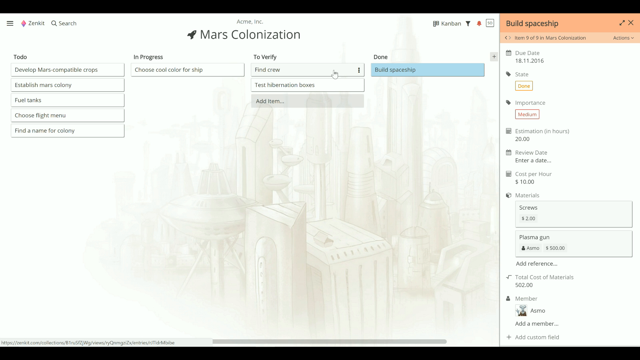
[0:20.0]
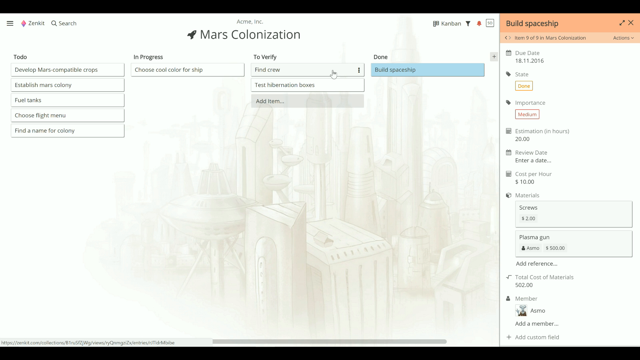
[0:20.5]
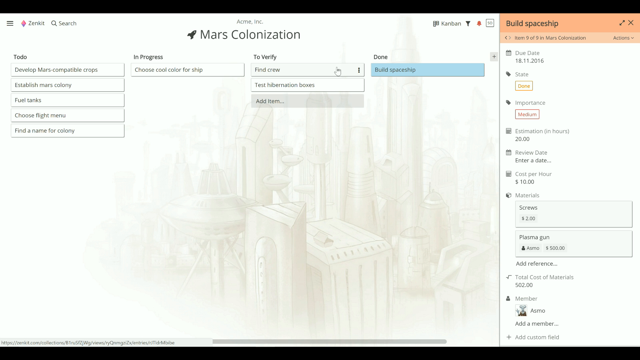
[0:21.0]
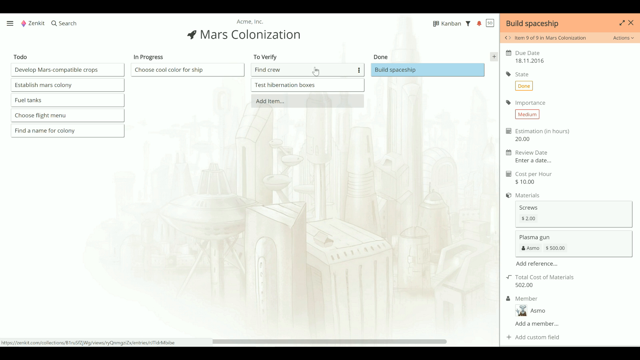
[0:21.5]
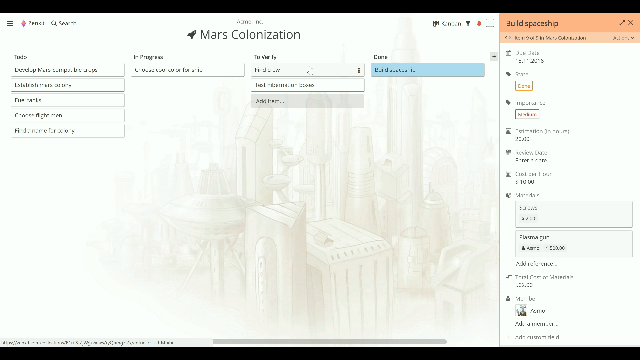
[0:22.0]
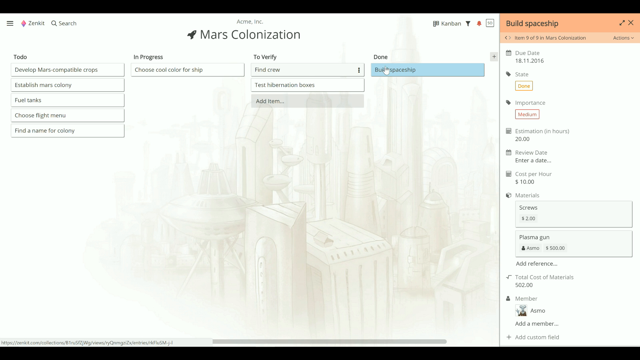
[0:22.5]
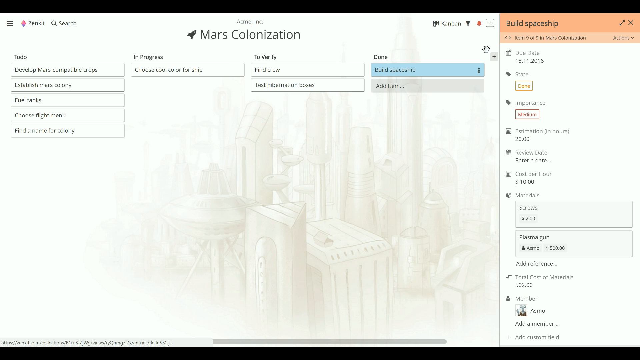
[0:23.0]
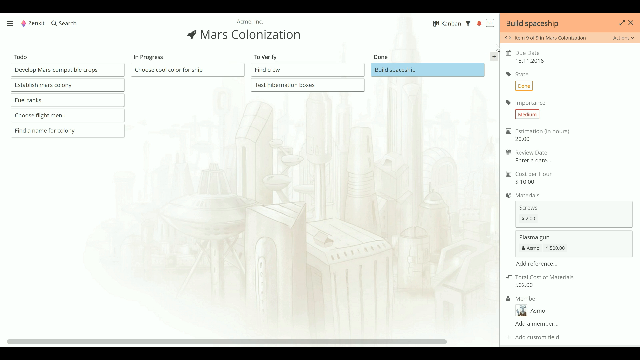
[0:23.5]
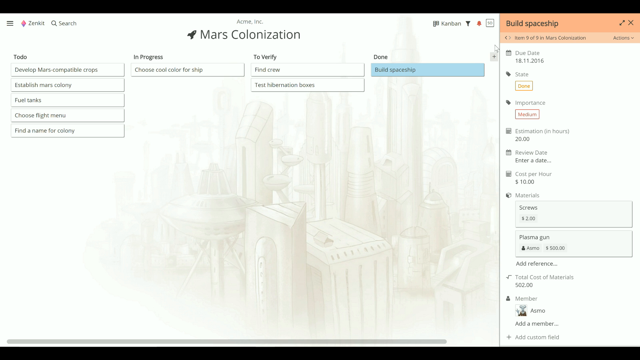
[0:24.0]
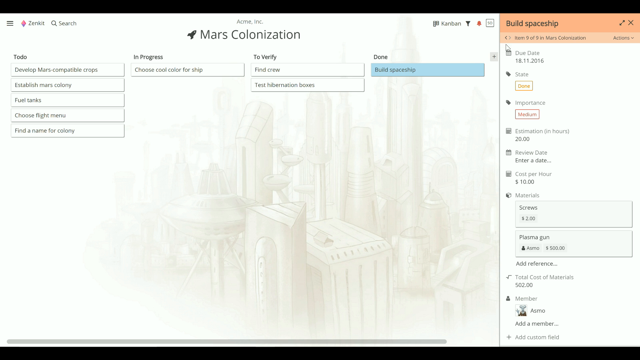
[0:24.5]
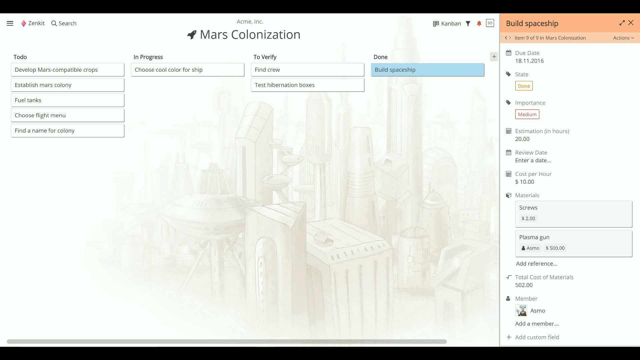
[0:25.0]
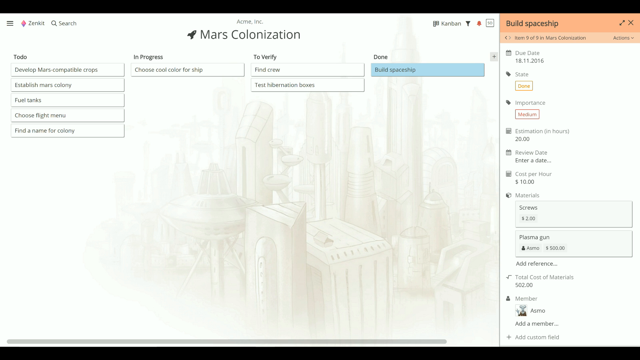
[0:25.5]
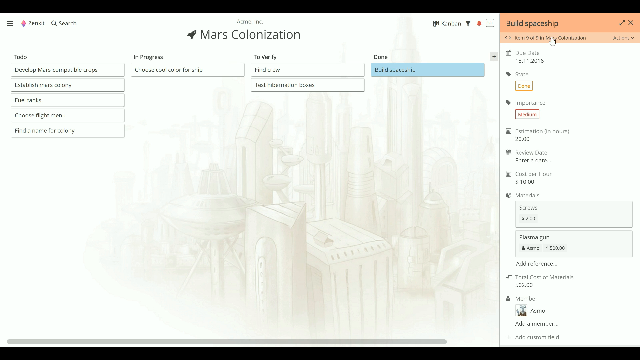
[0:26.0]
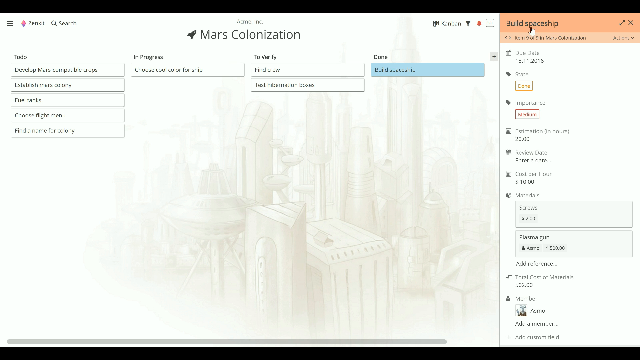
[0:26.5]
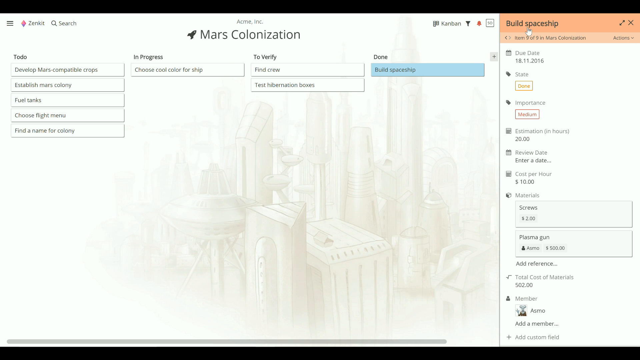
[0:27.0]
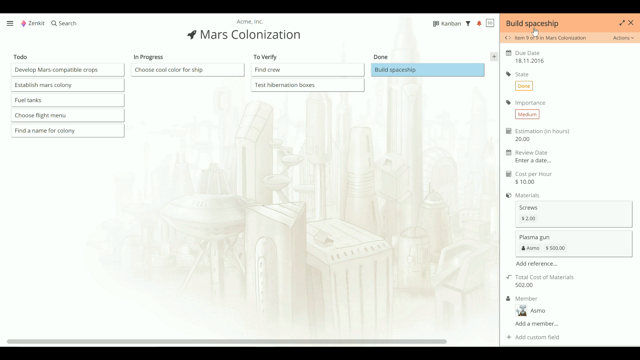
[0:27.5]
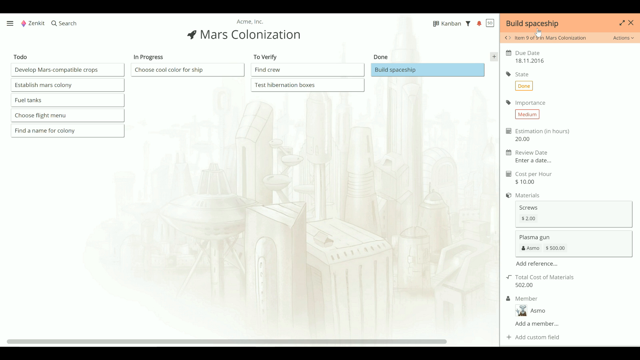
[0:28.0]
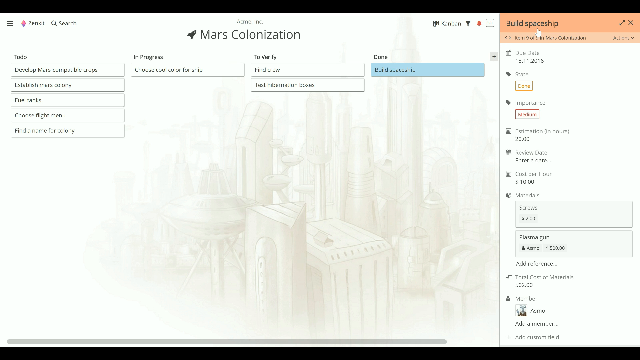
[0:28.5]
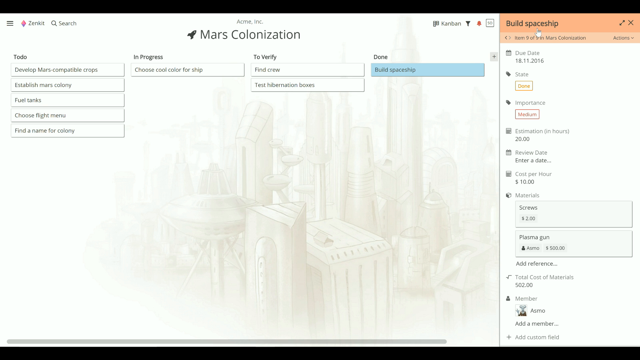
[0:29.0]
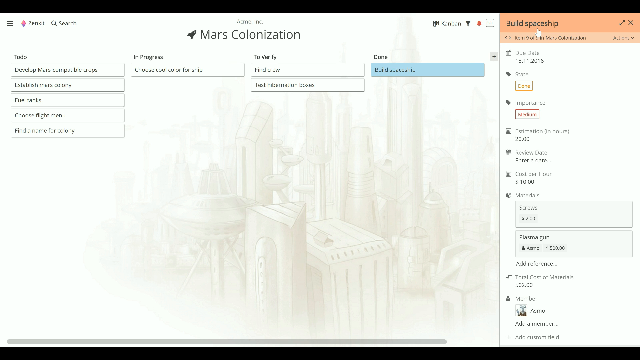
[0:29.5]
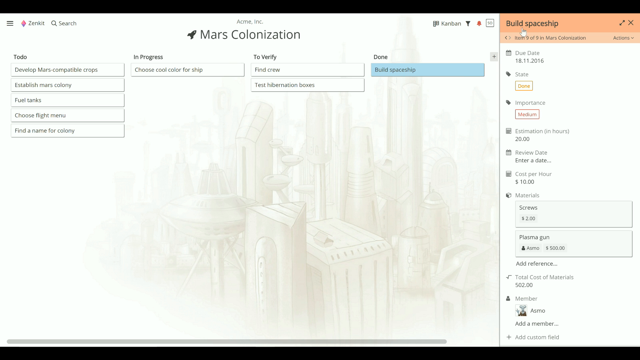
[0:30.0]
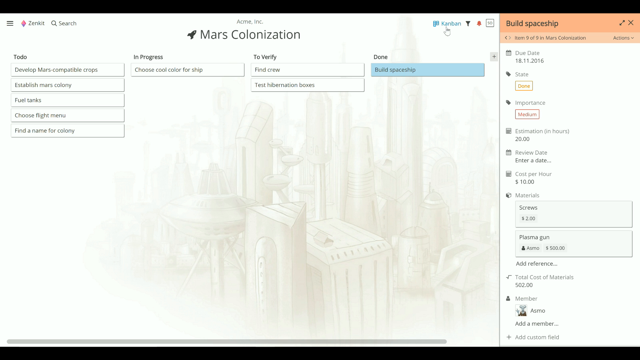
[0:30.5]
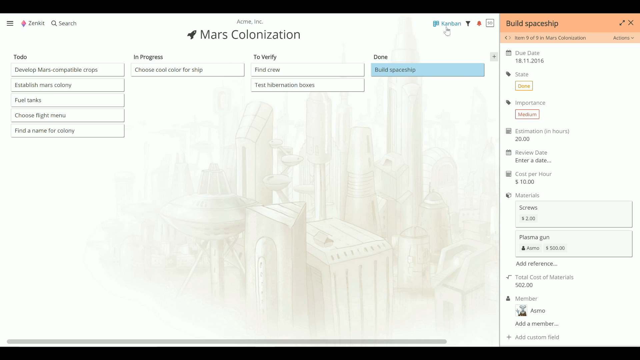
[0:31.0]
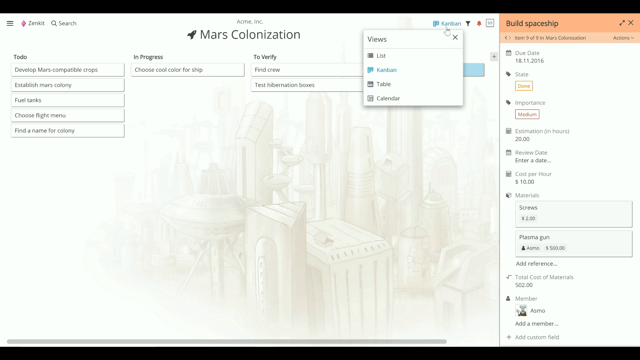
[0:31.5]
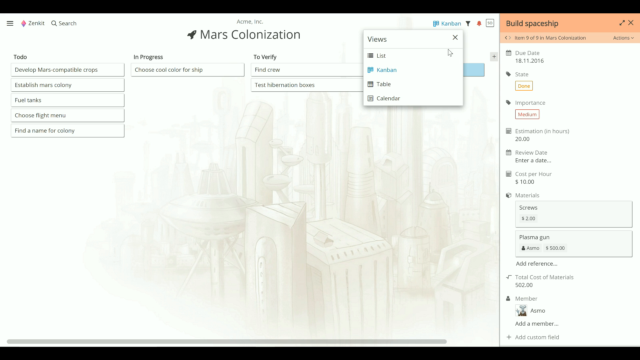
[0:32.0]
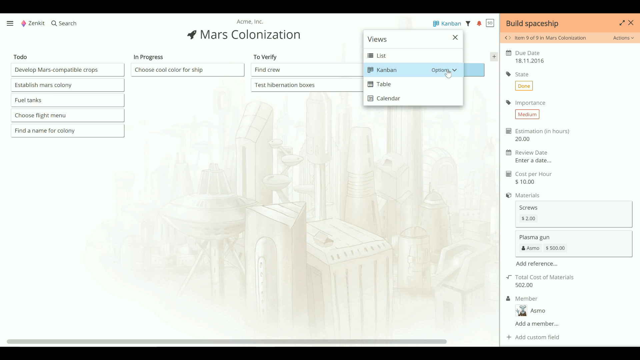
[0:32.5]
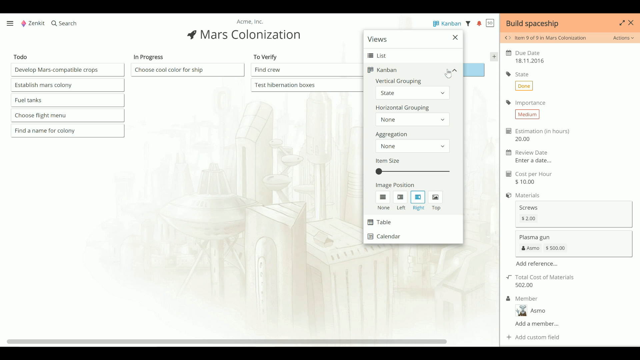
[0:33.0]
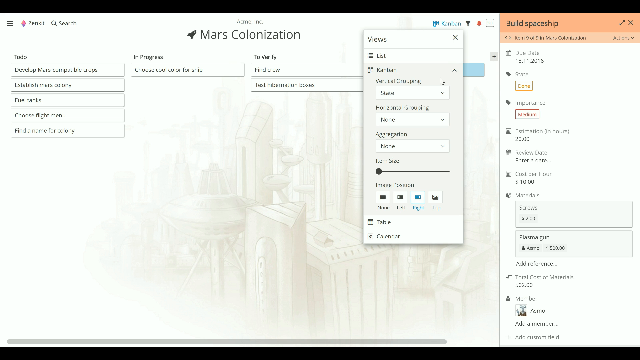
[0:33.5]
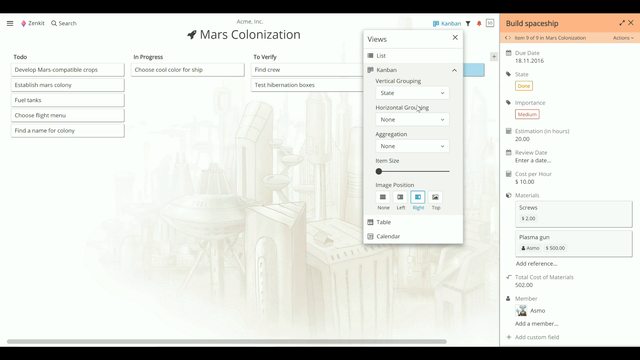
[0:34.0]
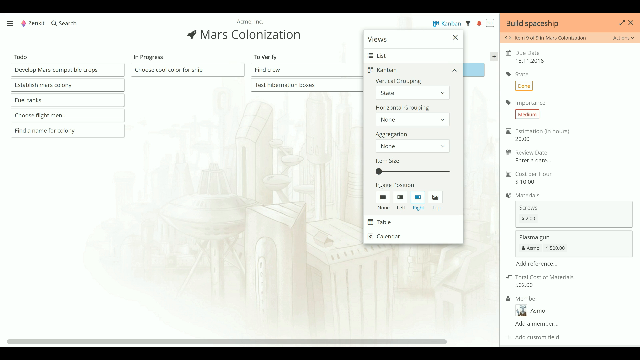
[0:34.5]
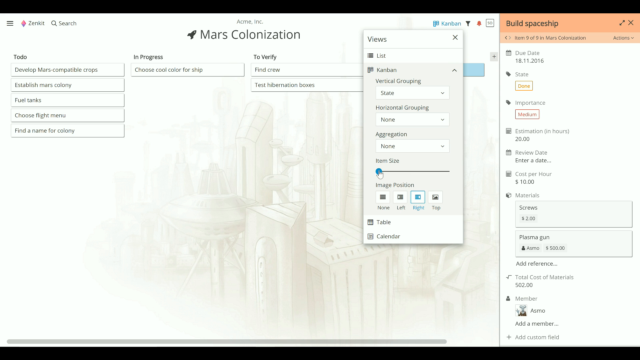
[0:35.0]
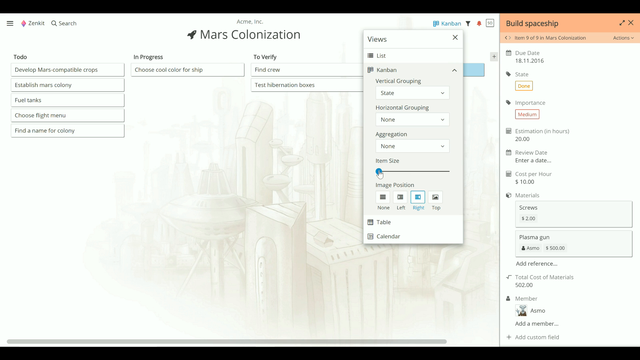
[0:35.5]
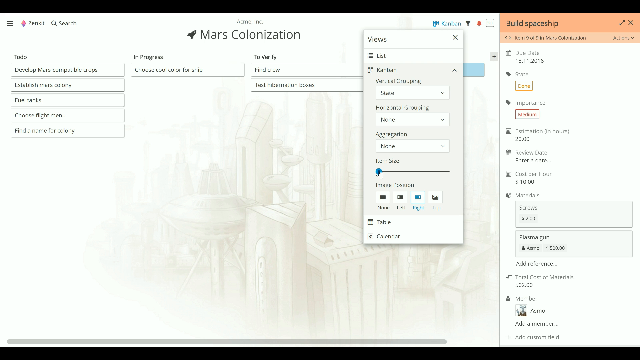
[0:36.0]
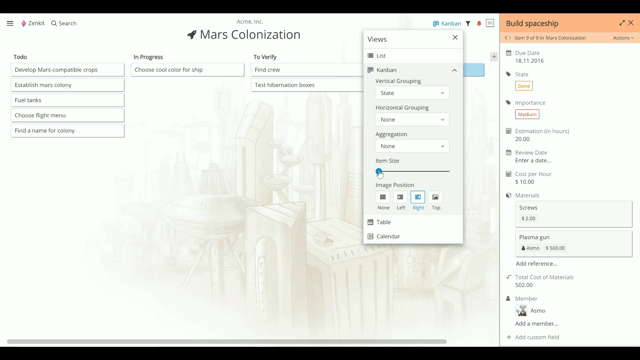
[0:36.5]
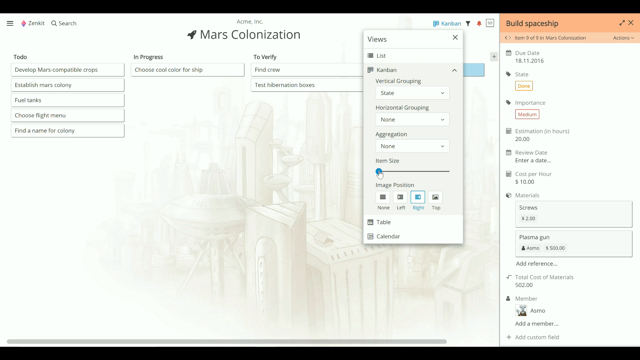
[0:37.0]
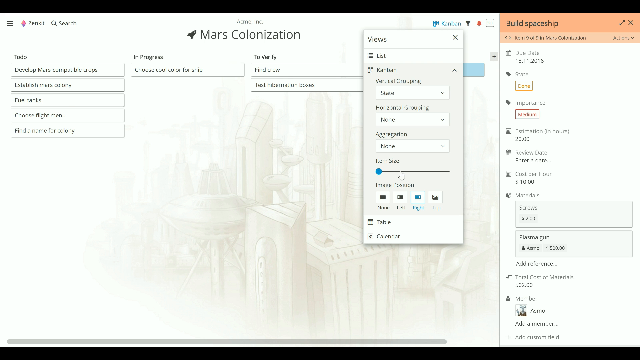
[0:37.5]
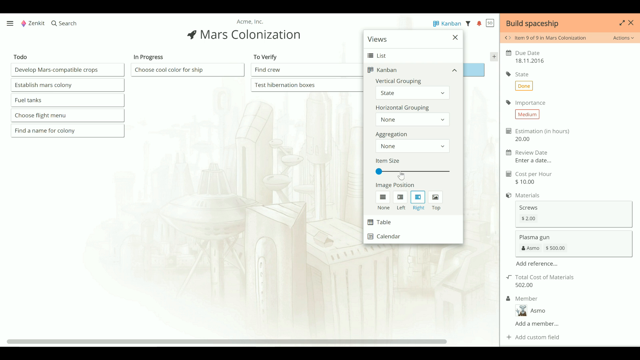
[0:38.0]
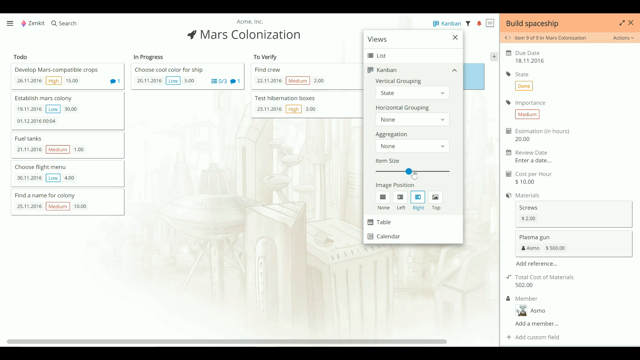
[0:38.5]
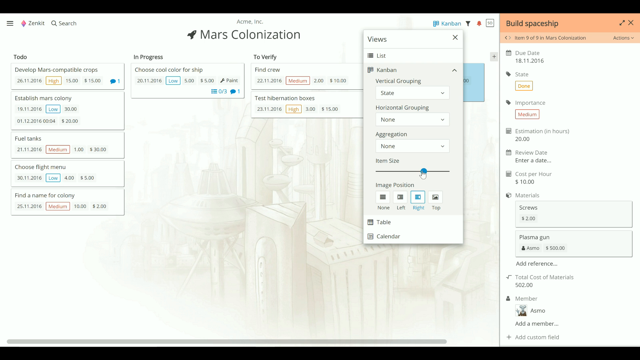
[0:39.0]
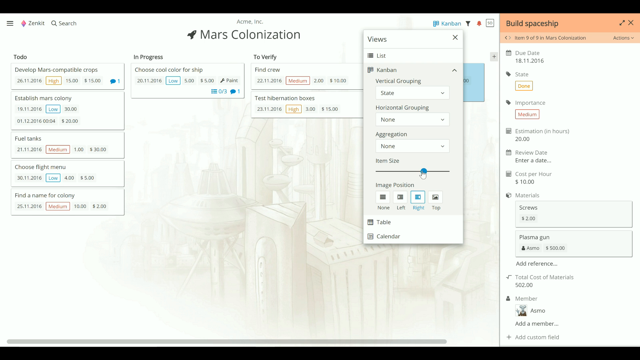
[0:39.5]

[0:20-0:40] The predominantly white options or control screen remains, with its very faint background illustration of a futuristic industrial city. The cursor moves around the drop-down tabs, first over an option for "To Verify", which opens up "Find Crew". The pointer then moves to the right over the "Build Spaceship" section, which occupies the far right of the screen, and hovers over the "Build Spaceship" wording, which sits within an orange rectangle. It then moves back to the left of the screen over the word "Kanban". This brings up a submenu superimposed on the screen that says "Views", with the options "List", "Kanban", "Table" and "Calendar" underneath. Kanban is selected, opening further options including "Vertical Grouping", "Horizontal Grouping" and "Aggregation". The cursor grabs a bar to increase item size and drags it to the right, and as it does, the base background menu boxes expand in size.